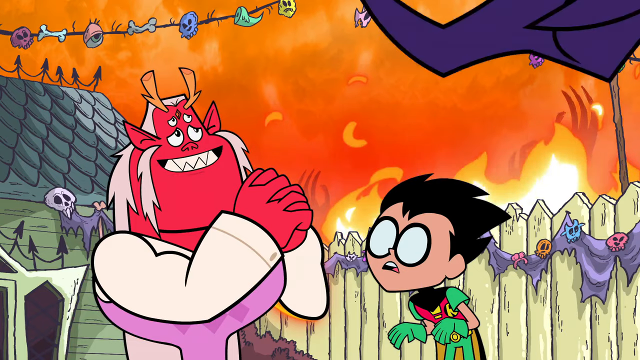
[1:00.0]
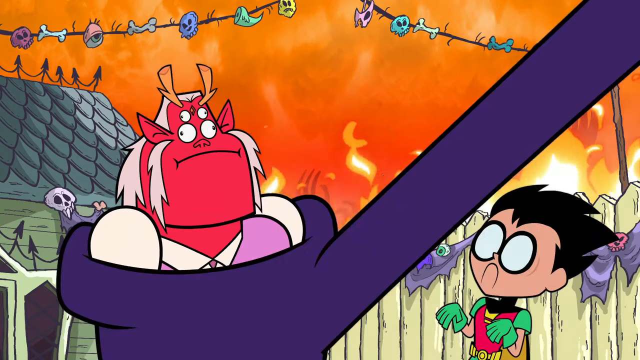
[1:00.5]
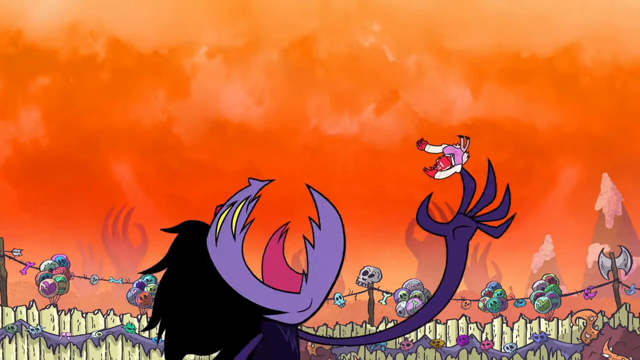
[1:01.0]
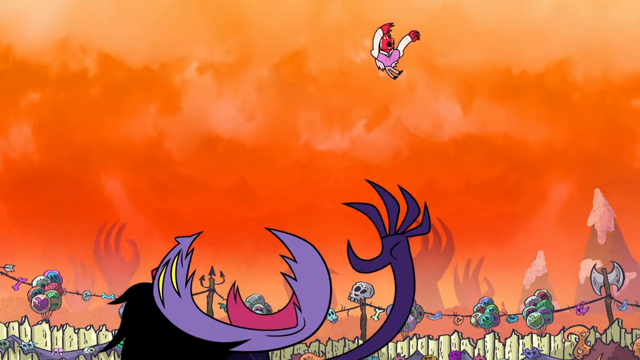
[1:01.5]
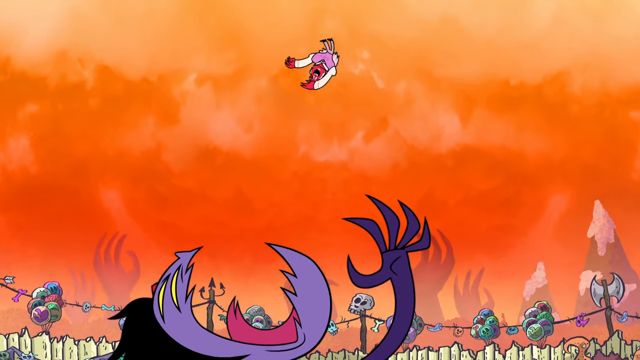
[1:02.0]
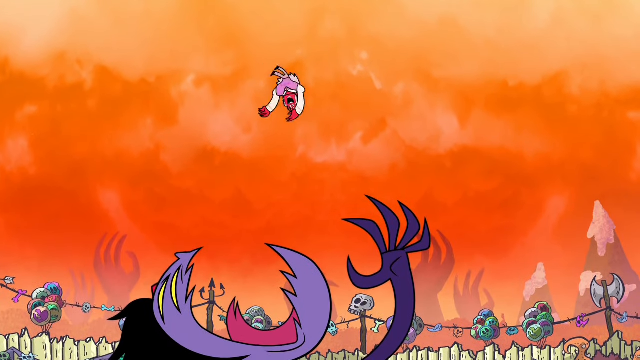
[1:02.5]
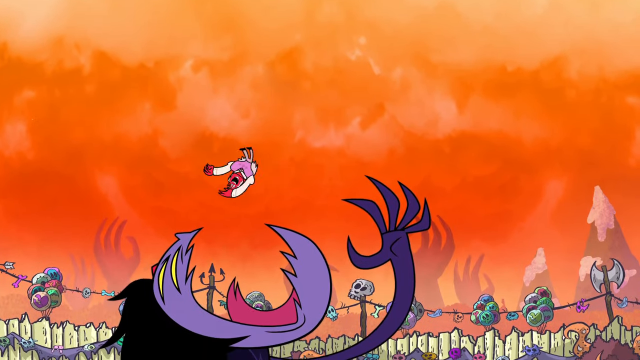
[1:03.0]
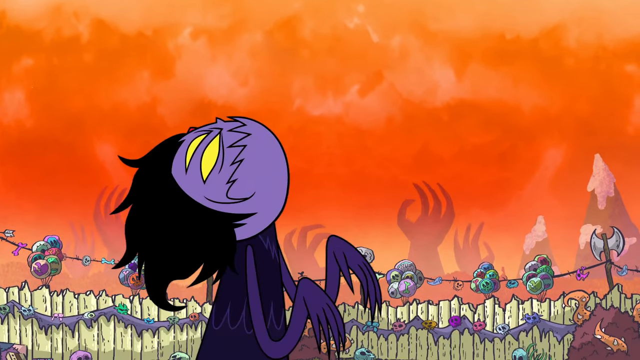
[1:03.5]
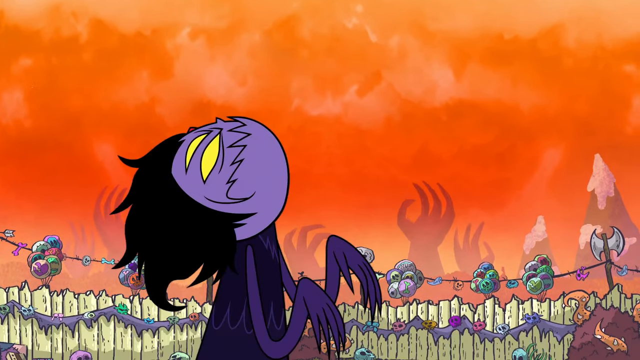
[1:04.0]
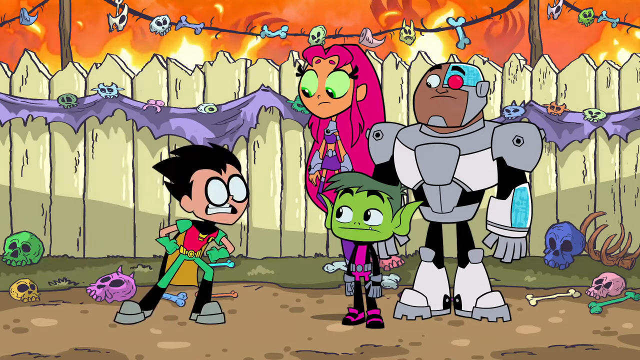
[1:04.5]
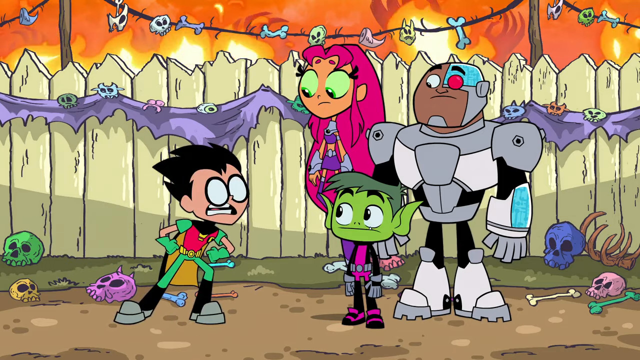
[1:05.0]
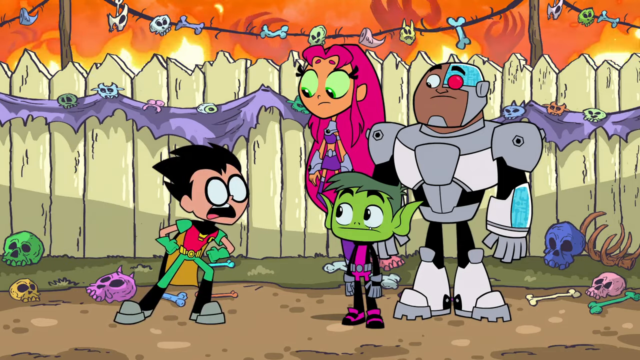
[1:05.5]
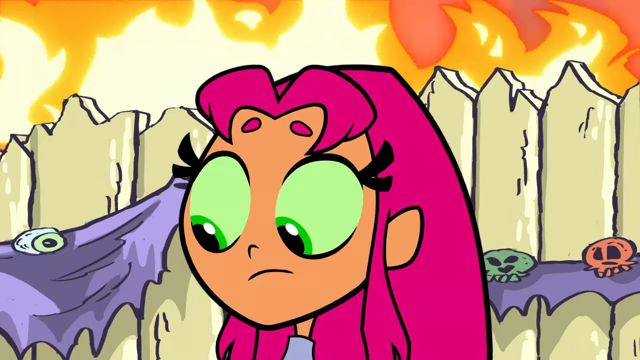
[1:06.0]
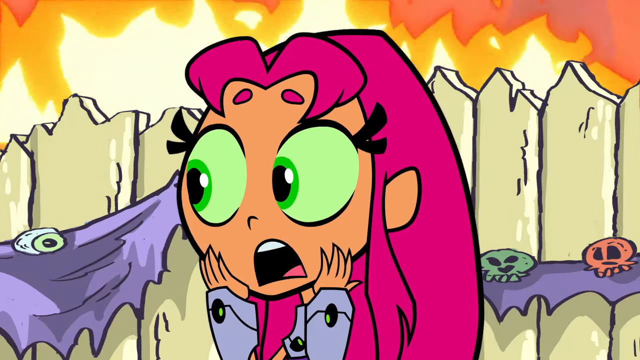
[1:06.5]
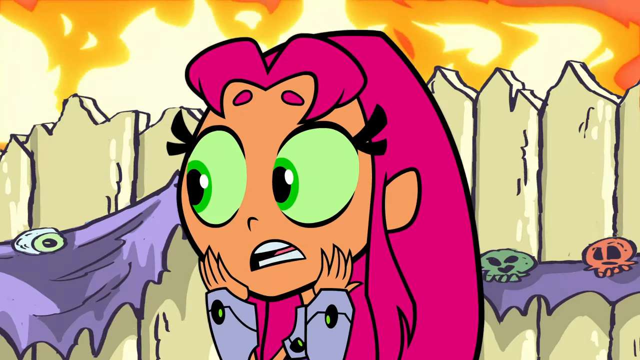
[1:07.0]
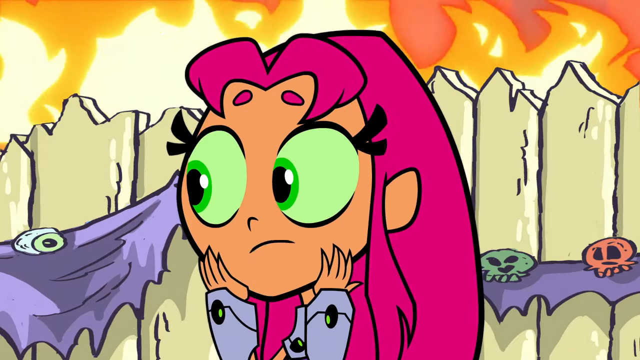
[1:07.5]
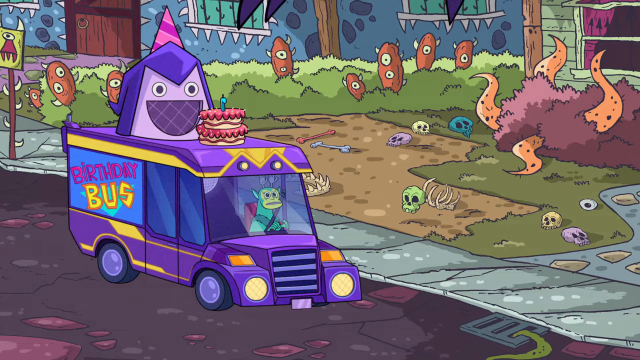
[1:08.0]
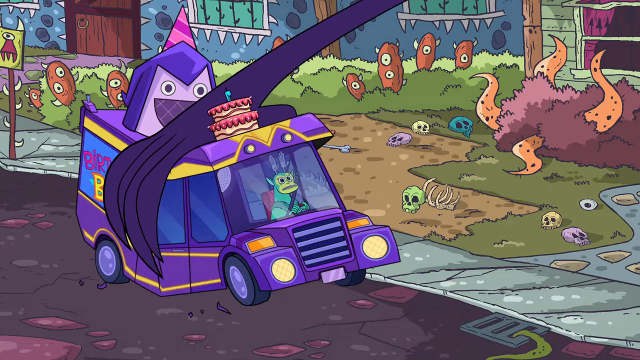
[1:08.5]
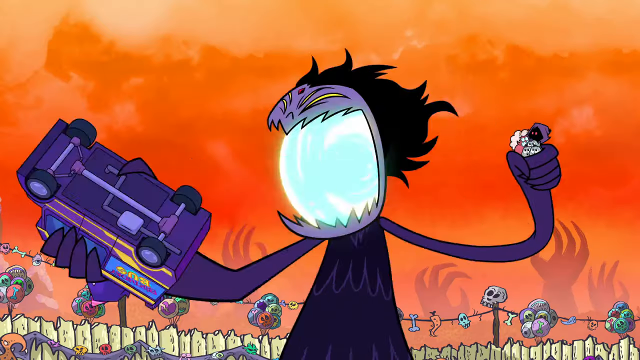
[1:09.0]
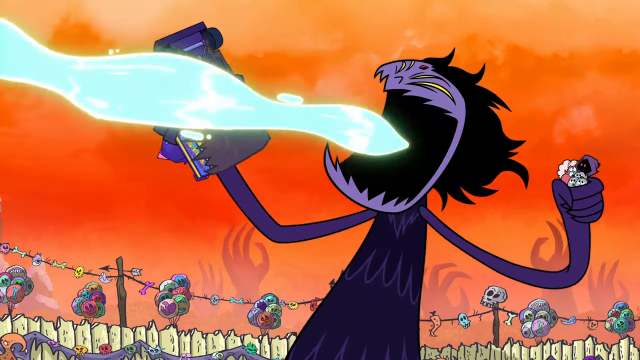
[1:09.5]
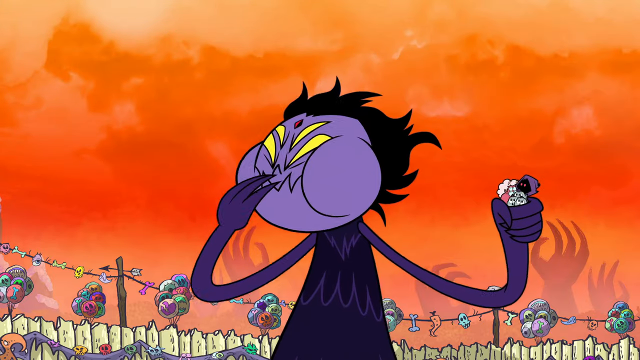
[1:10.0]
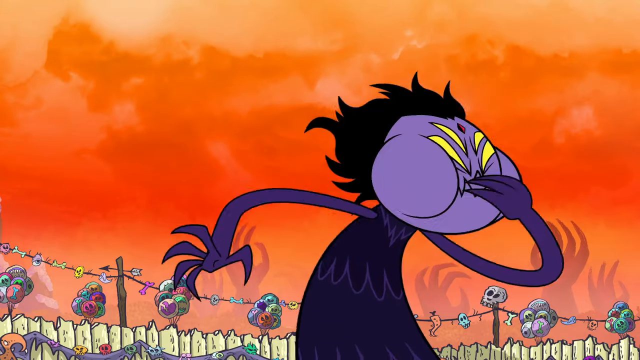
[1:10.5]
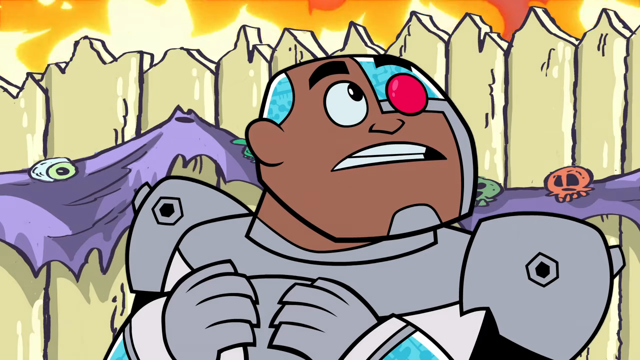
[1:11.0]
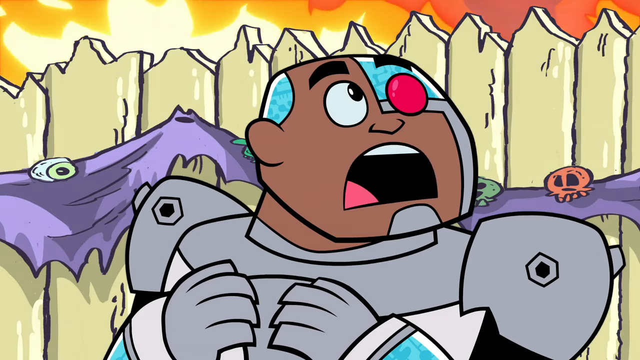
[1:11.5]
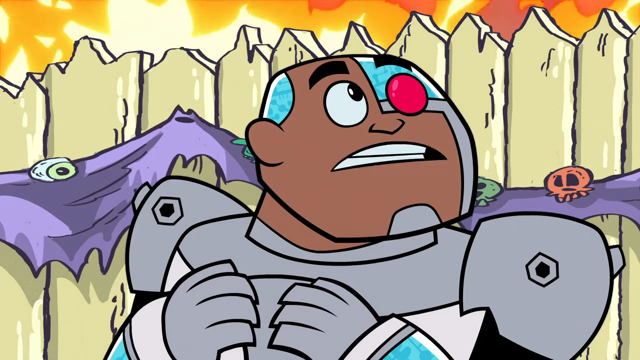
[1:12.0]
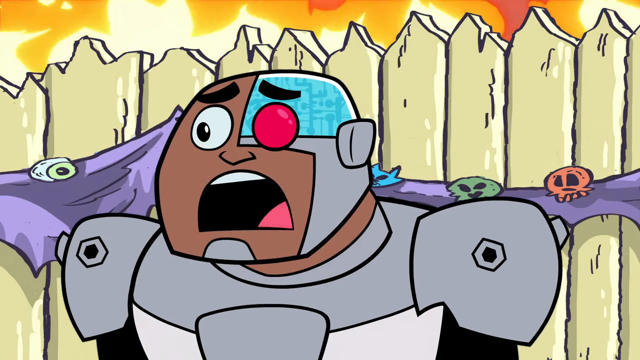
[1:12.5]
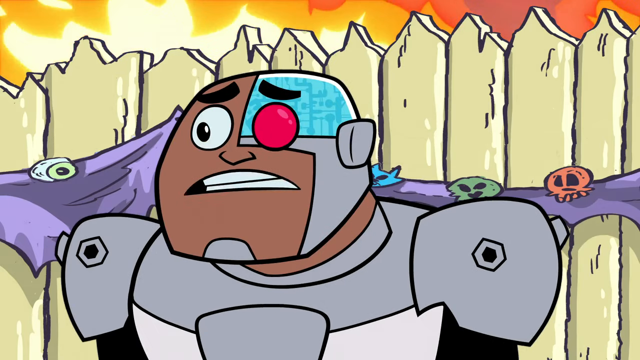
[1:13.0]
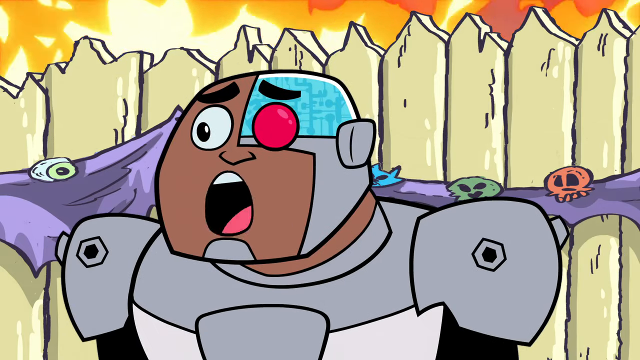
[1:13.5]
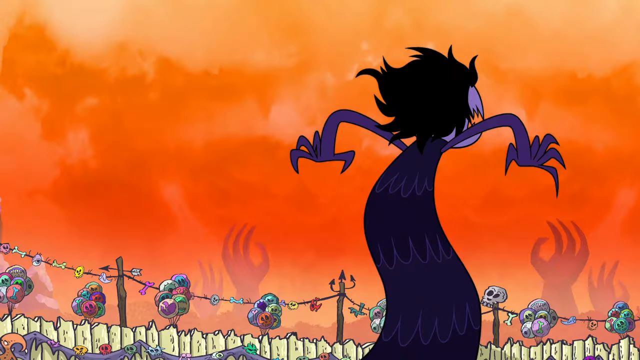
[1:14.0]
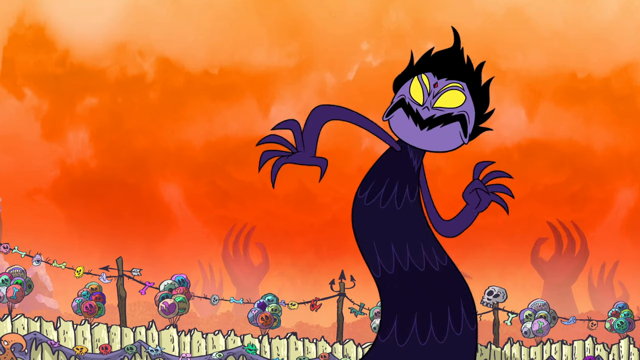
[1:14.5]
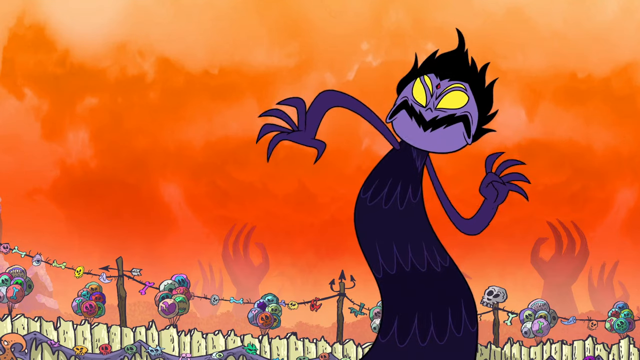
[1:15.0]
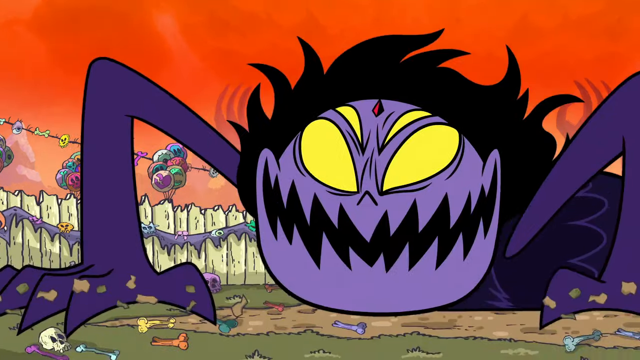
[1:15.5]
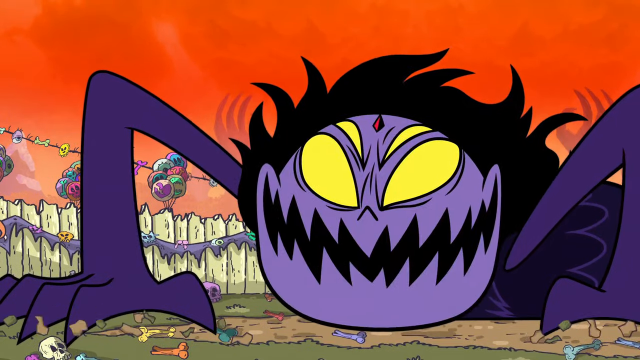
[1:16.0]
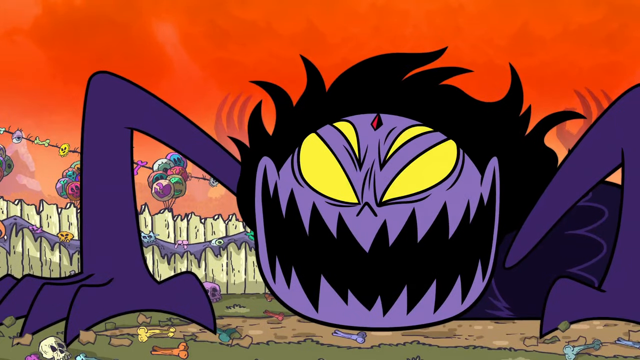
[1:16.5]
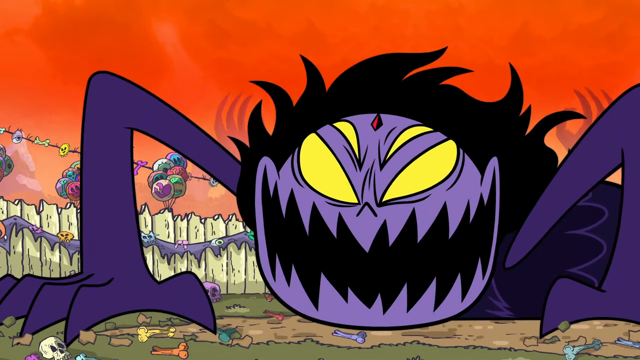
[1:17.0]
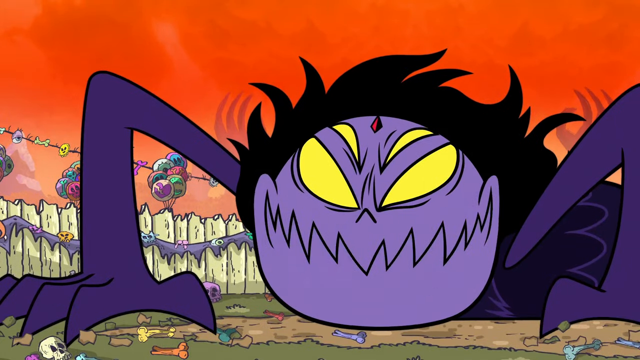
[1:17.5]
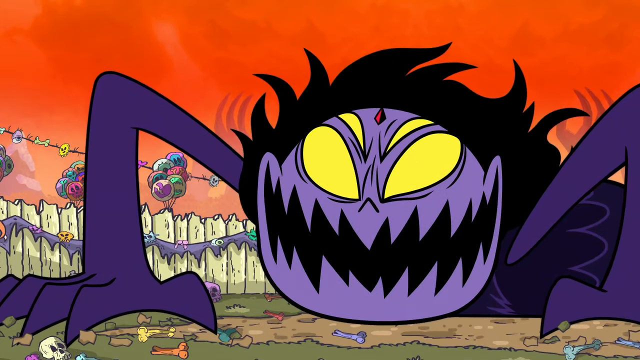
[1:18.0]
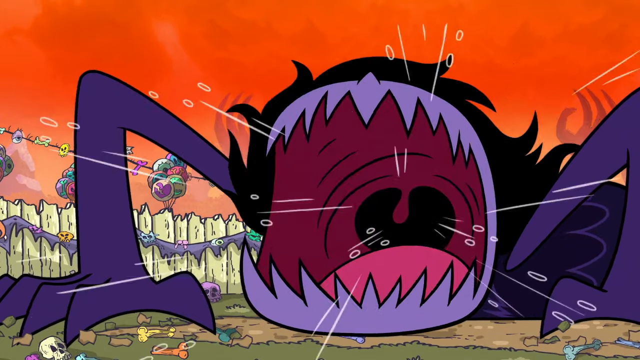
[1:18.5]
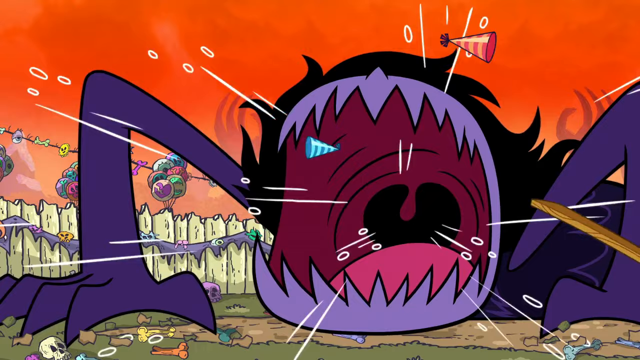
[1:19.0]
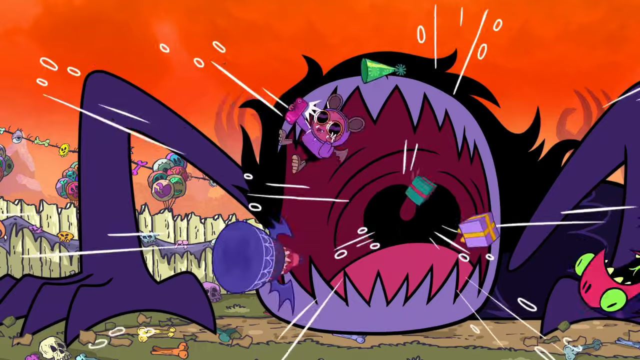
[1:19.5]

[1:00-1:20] Robin is in the background, looking at the devil-looking guy, who is all red with double eyes and horns and wears a suit, and who looks up lovingly at the monster. The monster grabs him, throws him up in the air, flips him around a few times, and eats him. The monster still looks the same: big, red, like a worm with yellow eyes, a big mouth and hair. Robin goes back to his friends, the green goblin, the cyborg and the girl in purple who looks like she can fly, and they talk, seeming upset and concerned. The scene switches outside to what looks like a purple ice cream truck with a monster on top and a monster driving. The goth girl turned monster grabs the truck, white poison gas shoots out as she grabs it, and she eats the truck. In her other hand she holds the evil Miss Piggy, Death and their three kids, and she eats them as well. The cyborg looks at her, freaking out, and looks at the other friends. After she finishes eating, the monster turns around and goes down underground. She looks like a big buggy worm with yellow eyes and a triangle in the middle of her forehead, with an evil laugh, completely evil and ready to do harm, and she is apparently saying something to somebody. Suddenly she opens her mouth and it acts like a vacuum, pulling in everything around, including the presents and a lady or monster in a hoodie with a phone and sunglasses who appears to be making a peace sign. Then all this stuff comes out.